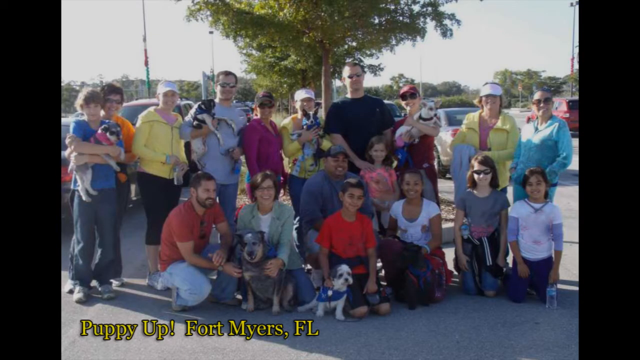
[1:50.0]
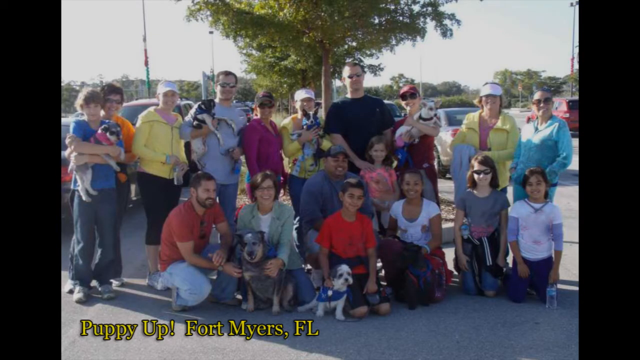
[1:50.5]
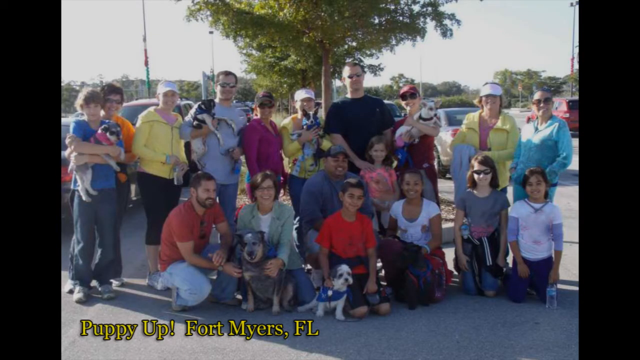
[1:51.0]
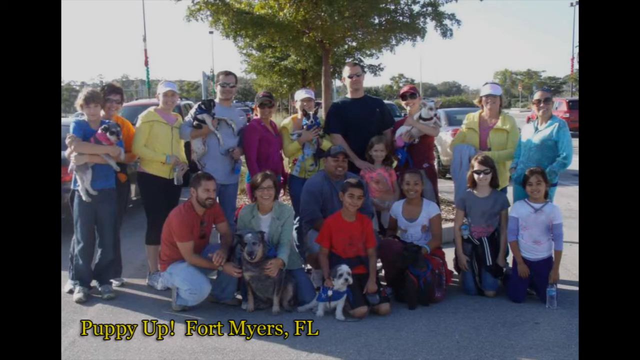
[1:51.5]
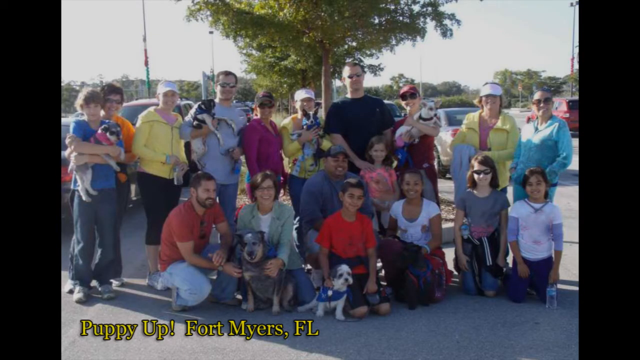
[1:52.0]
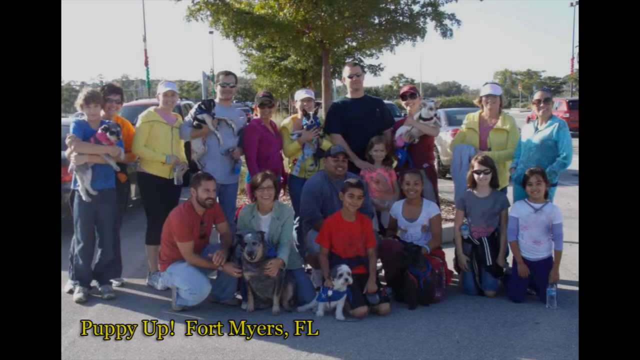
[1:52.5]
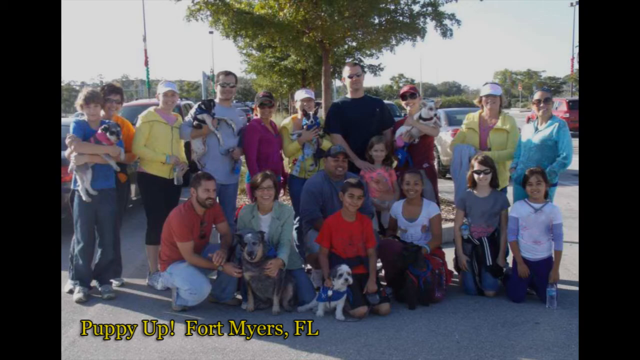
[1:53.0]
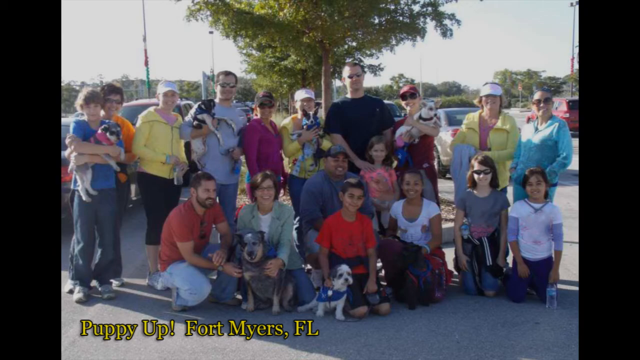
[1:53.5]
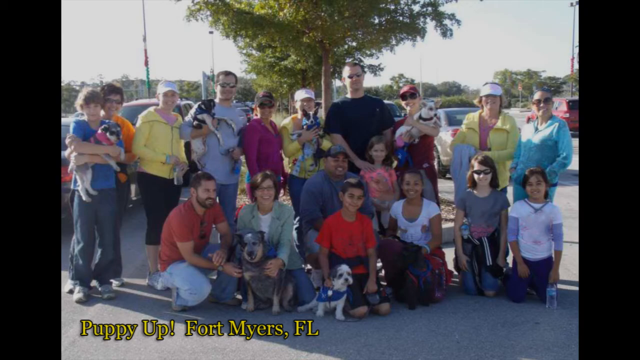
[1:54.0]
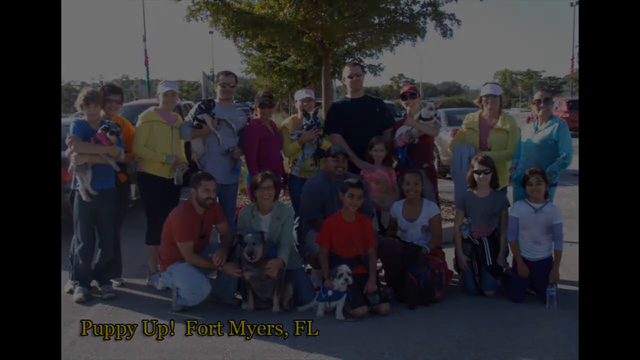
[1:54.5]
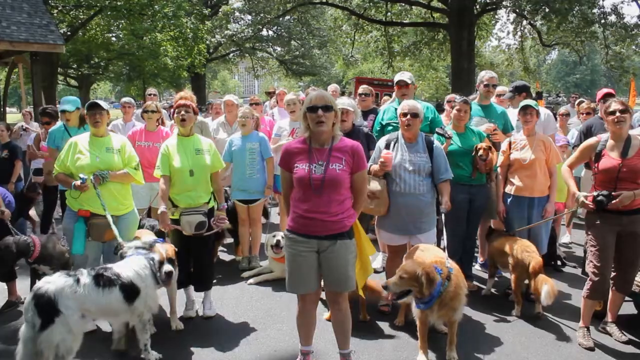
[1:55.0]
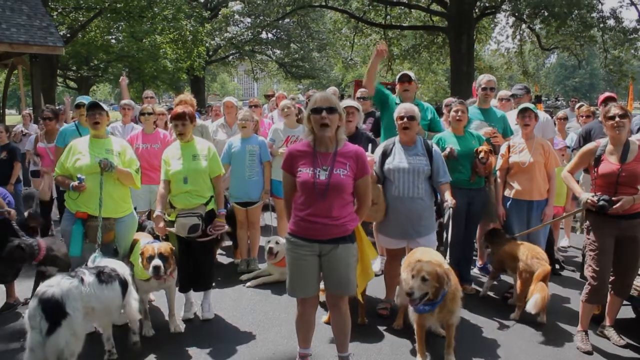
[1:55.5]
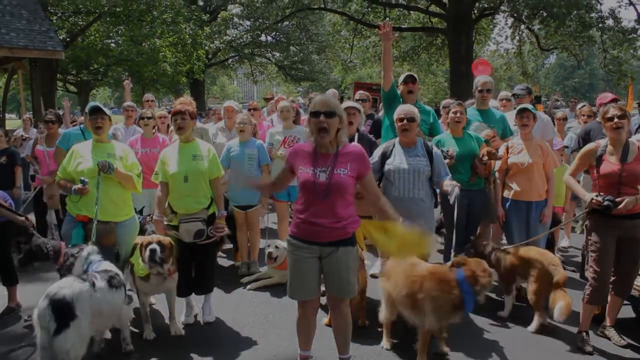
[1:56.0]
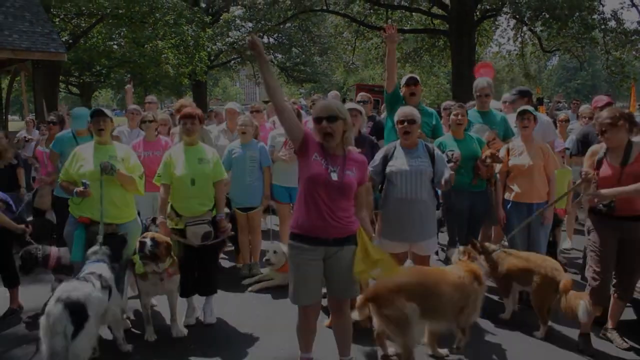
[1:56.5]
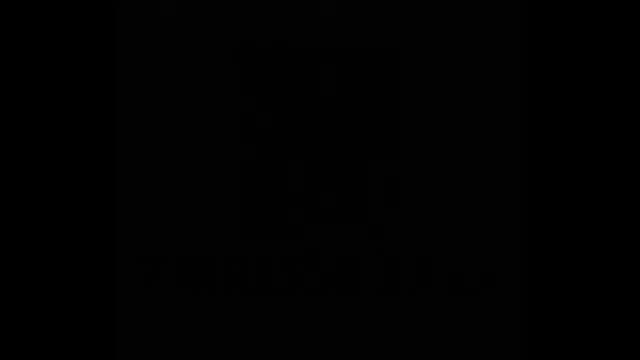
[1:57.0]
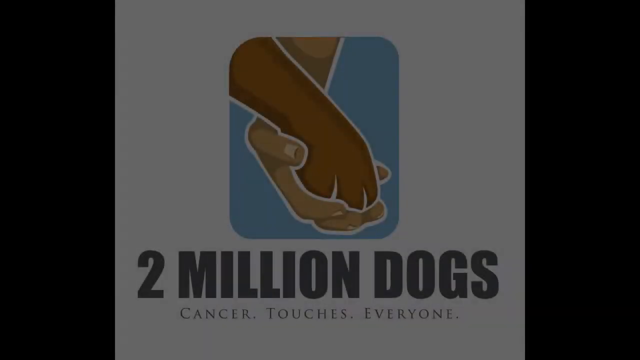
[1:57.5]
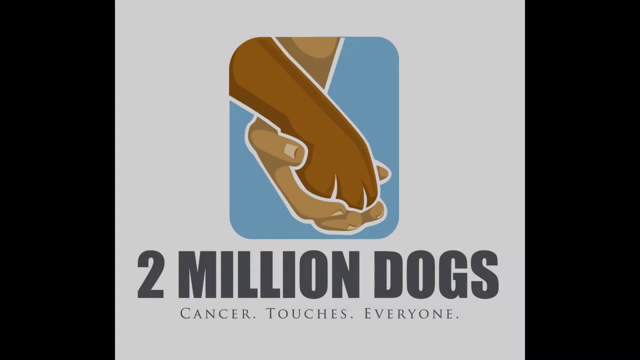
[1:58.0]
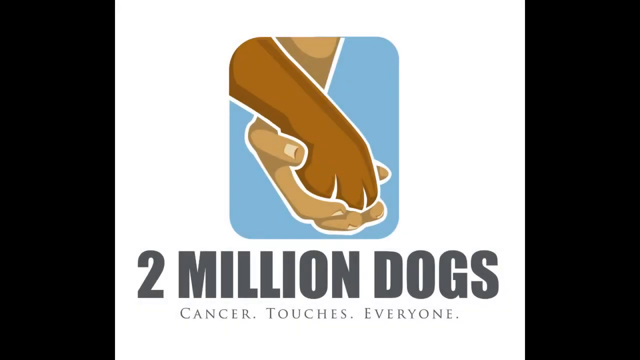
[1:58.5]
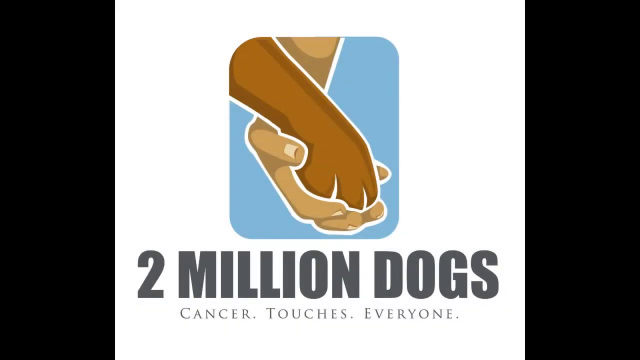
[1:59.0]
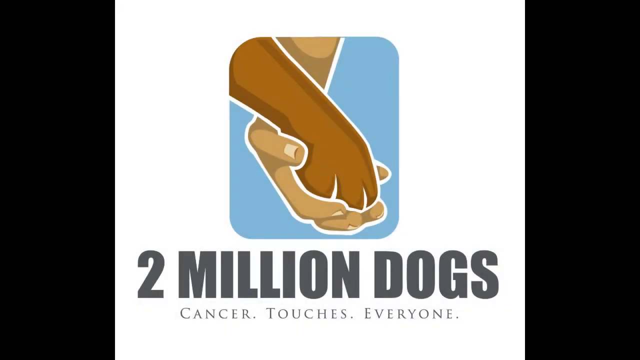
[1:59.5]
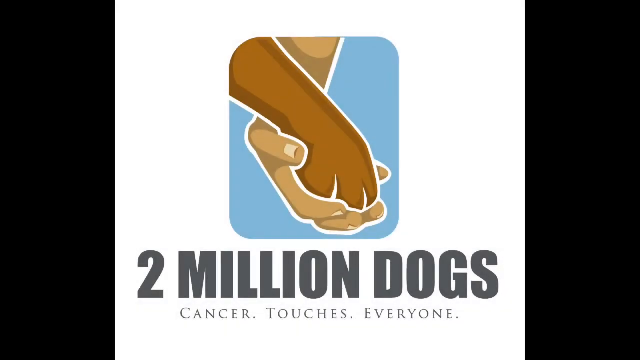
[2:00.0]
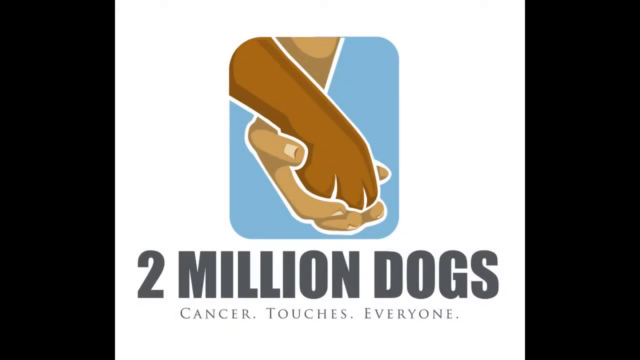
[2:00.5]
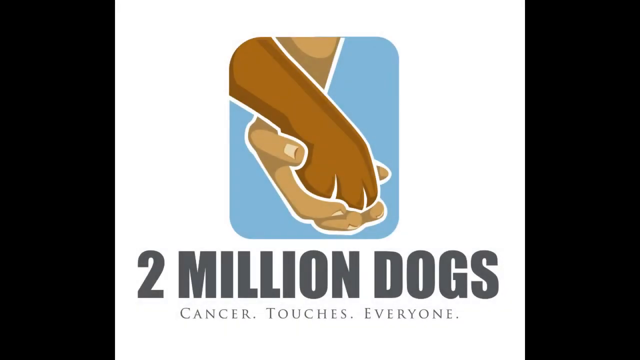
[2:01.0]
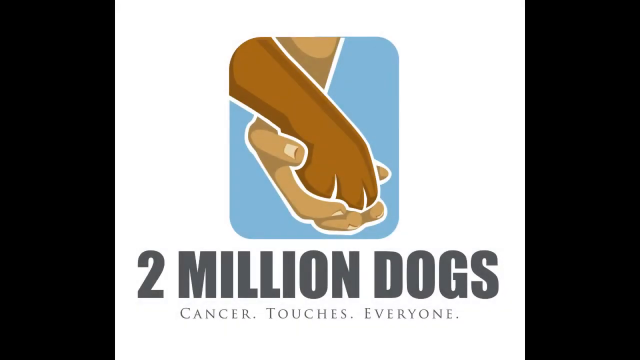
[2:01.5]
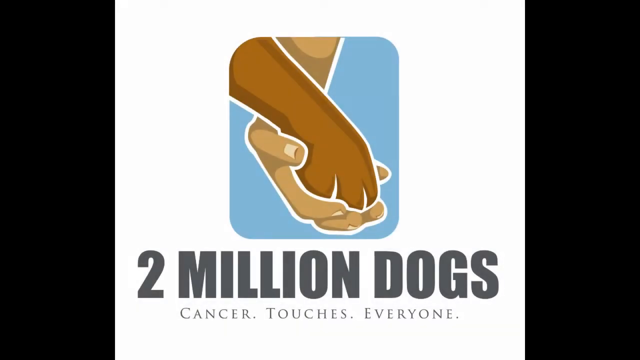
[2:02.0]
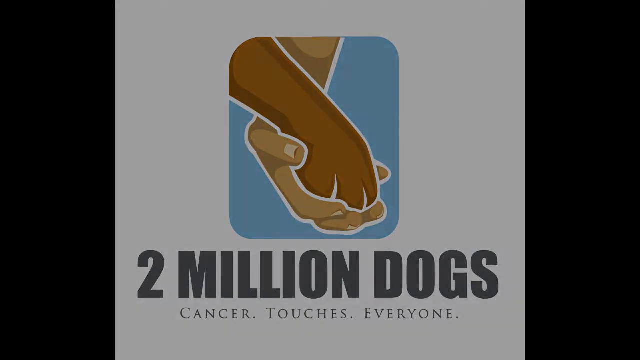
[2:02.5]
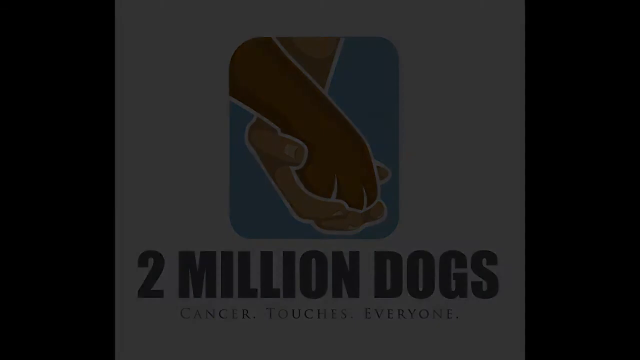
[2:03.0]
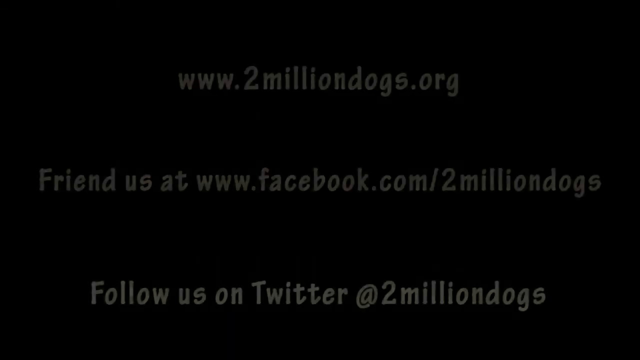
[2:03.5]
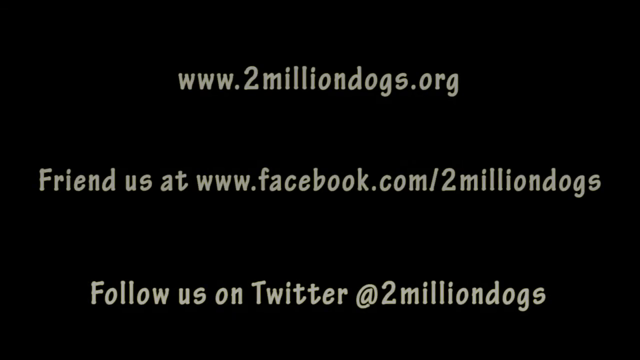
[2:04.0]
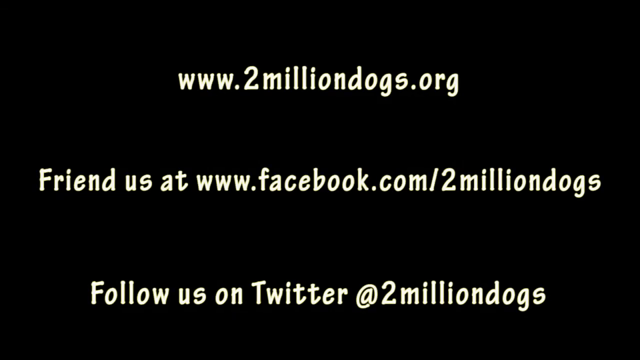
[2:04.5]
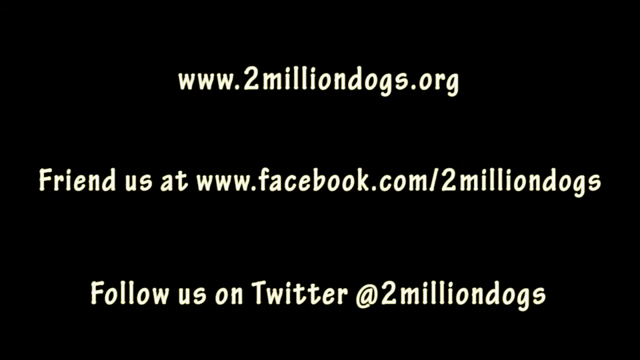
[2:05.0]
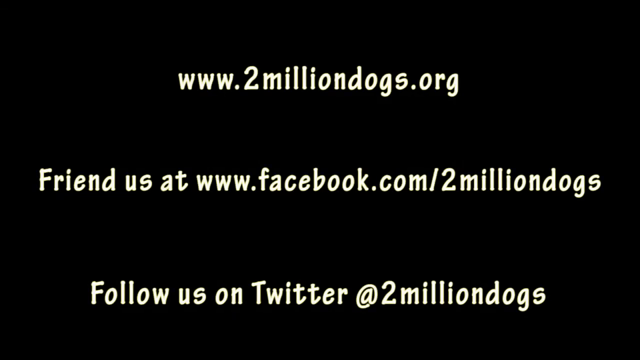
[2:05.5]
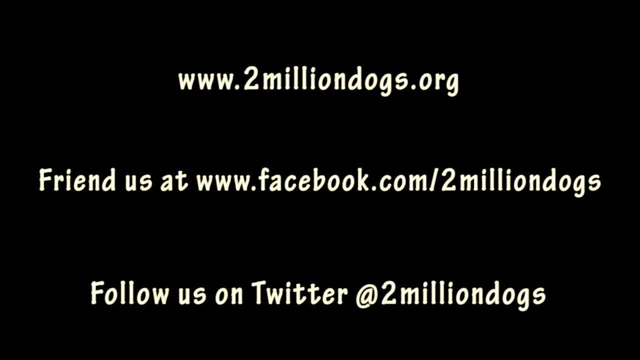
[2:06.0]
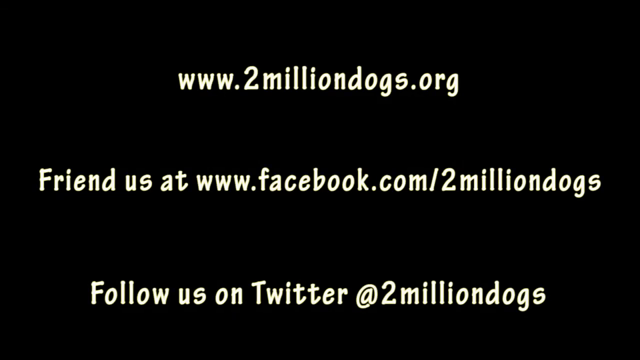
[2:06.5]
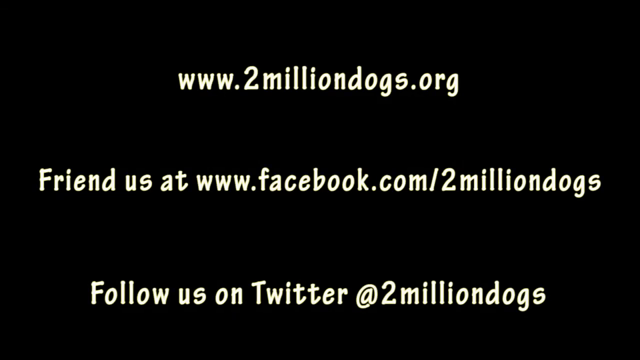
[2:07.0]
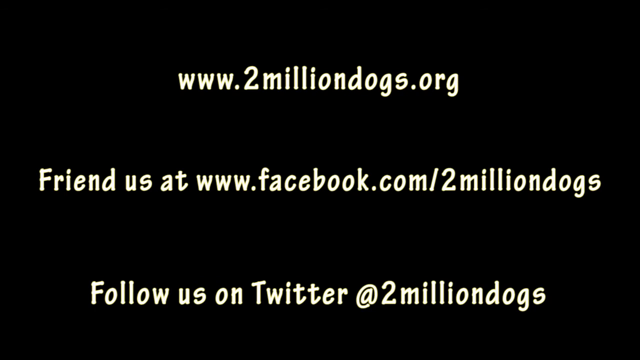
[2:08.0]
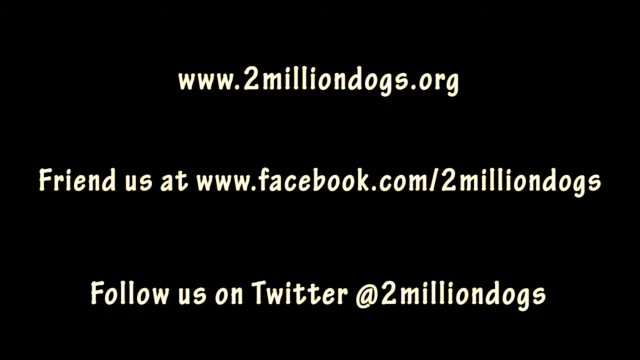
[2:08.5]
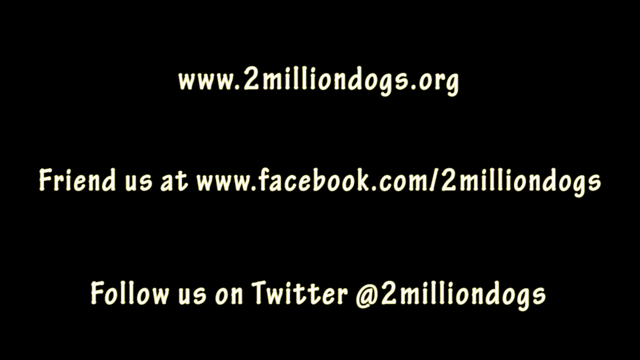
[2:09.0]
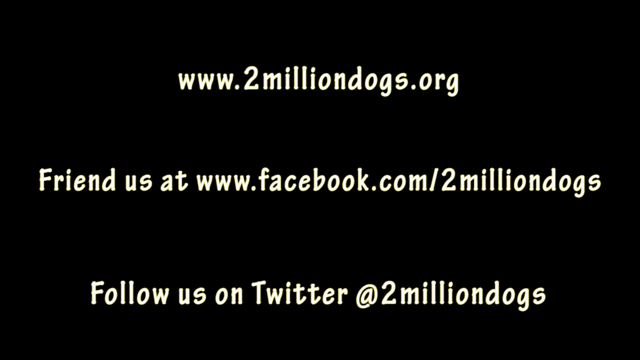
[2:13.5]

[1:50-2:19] Text reads "two million dogs" and "cancer touches everyone". A picture shows a person with a dog, followed by "two million dogs" with a Facebook address for two million dogs and "follow us on twitter". The video states "cancer is the greatest global killer, no man, woman, child or companion animal is spared from its killing field." Virginia Morgan, executive director of two million dogs, talks. The statement that just like humans, dogs naturally develop cancer, that the study of the similarities is called comparative oncology, and that cancer is far more common in canines than in people appears.